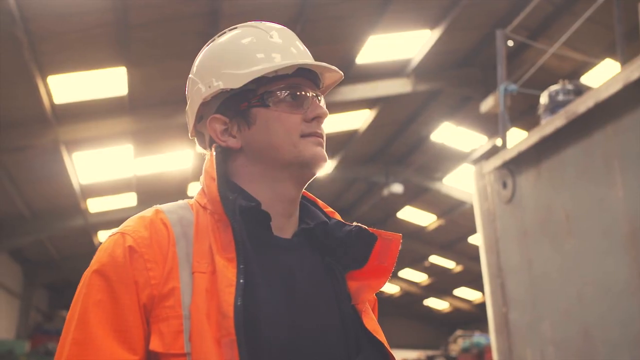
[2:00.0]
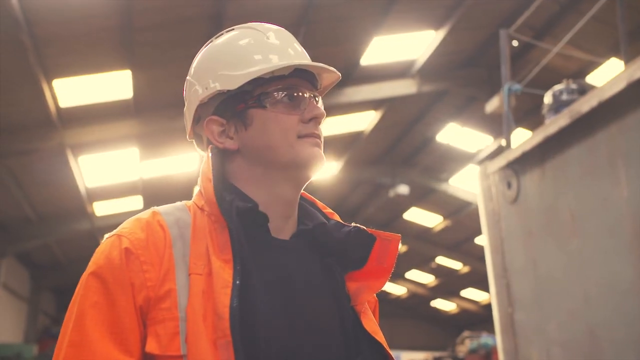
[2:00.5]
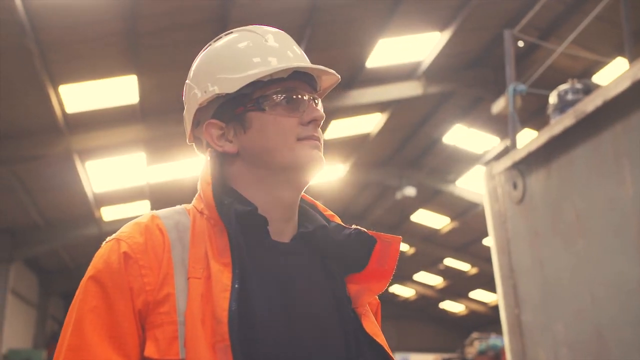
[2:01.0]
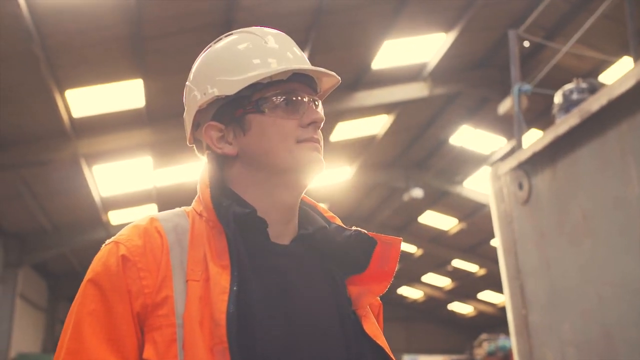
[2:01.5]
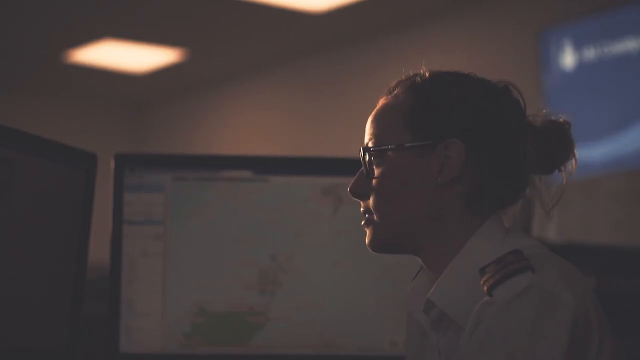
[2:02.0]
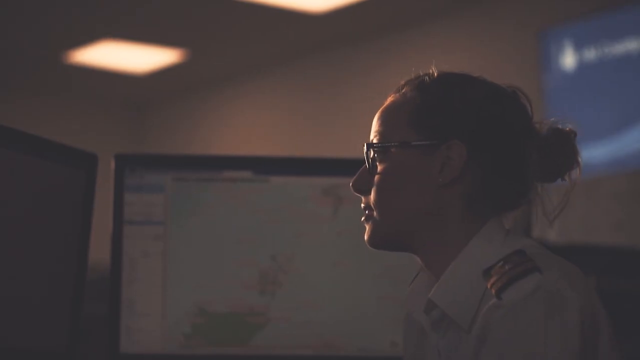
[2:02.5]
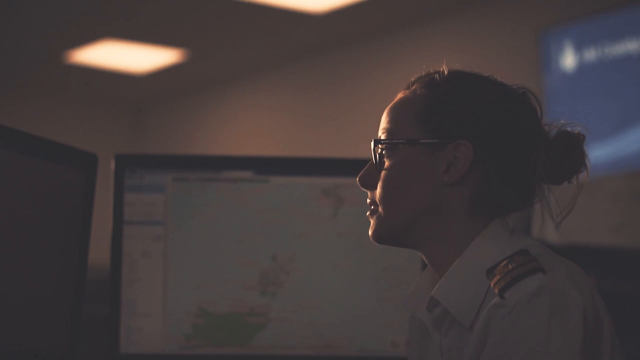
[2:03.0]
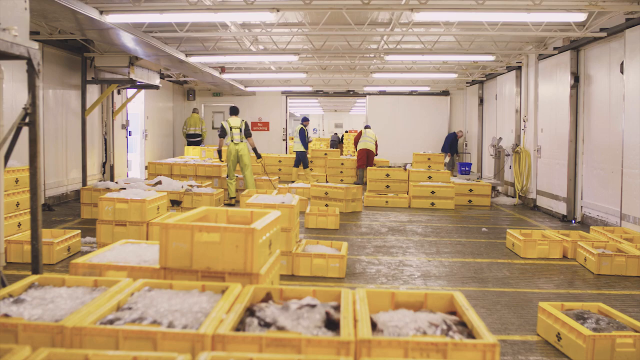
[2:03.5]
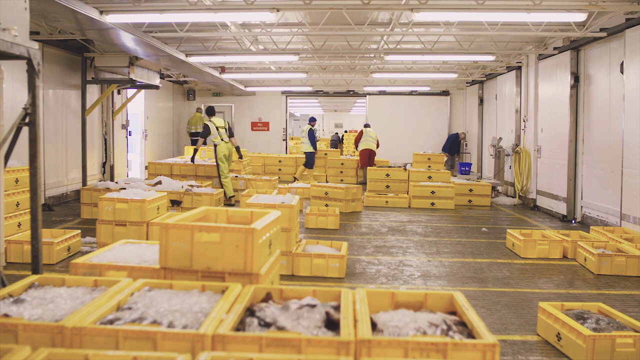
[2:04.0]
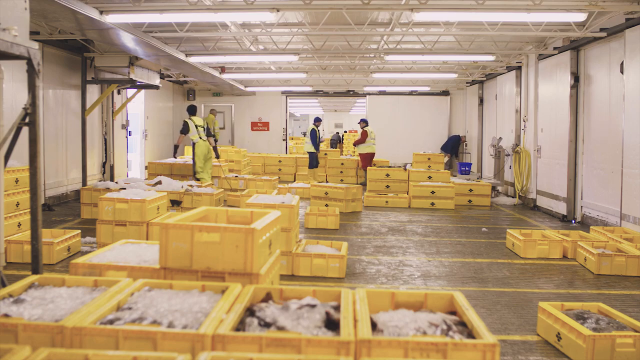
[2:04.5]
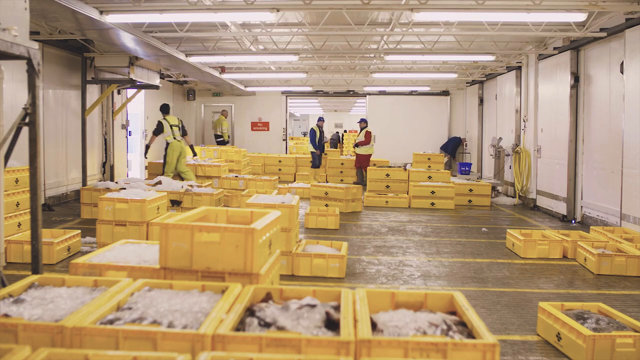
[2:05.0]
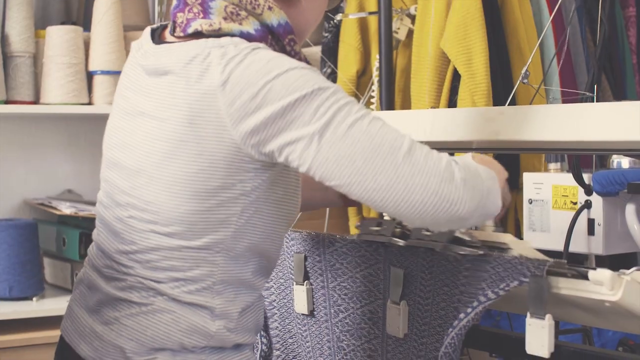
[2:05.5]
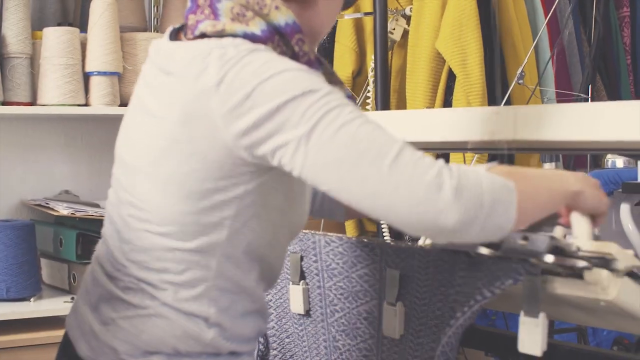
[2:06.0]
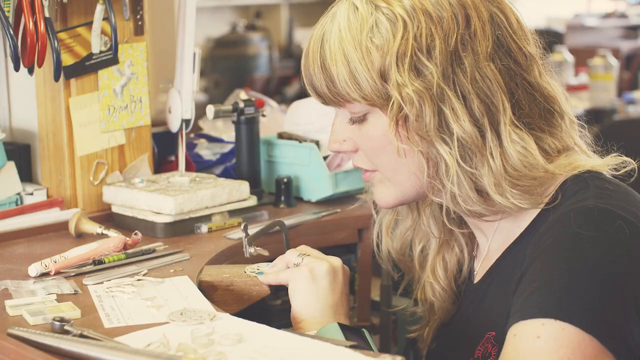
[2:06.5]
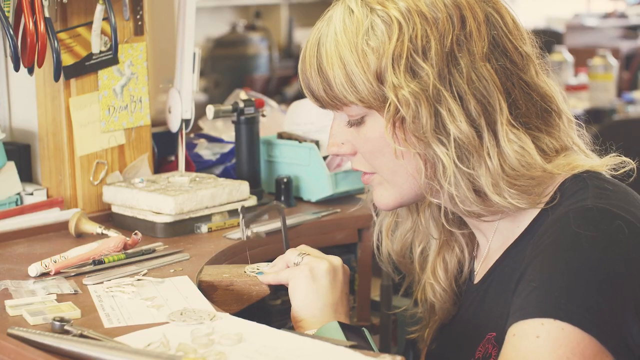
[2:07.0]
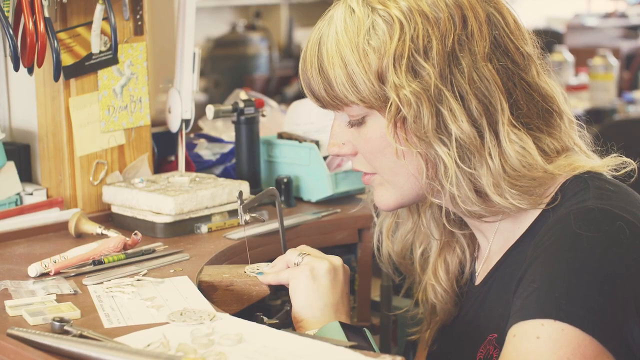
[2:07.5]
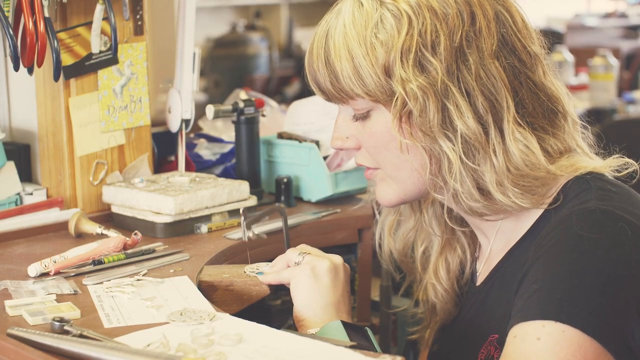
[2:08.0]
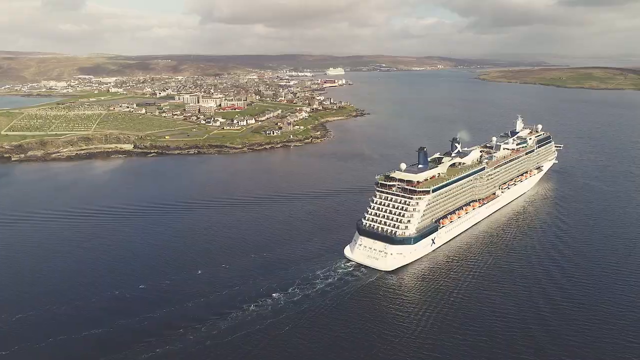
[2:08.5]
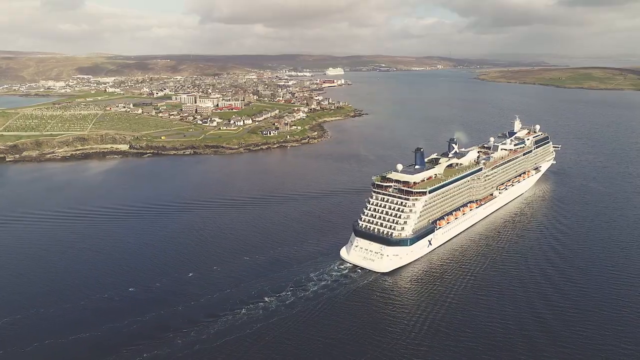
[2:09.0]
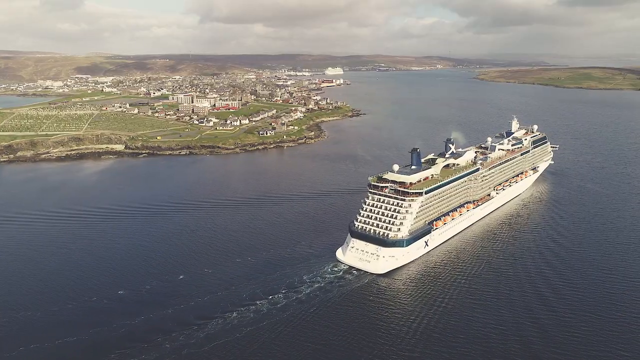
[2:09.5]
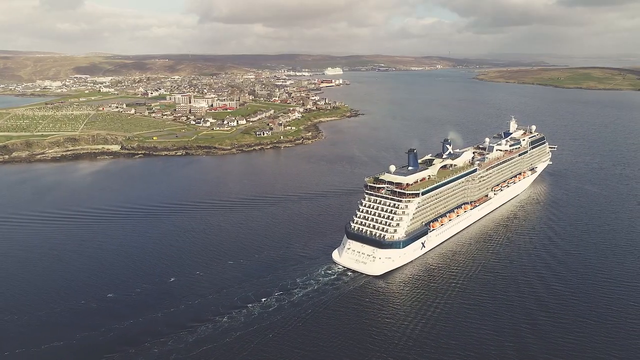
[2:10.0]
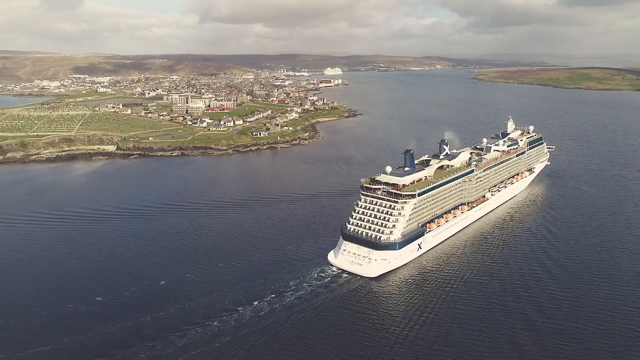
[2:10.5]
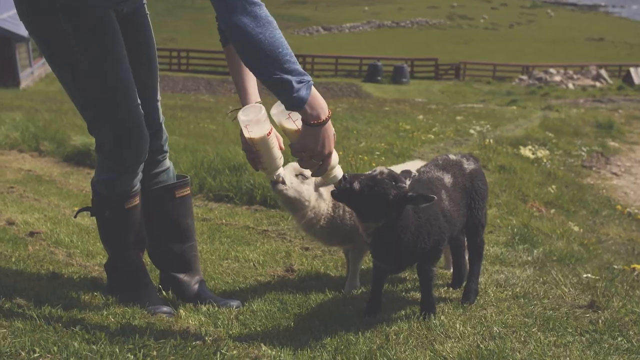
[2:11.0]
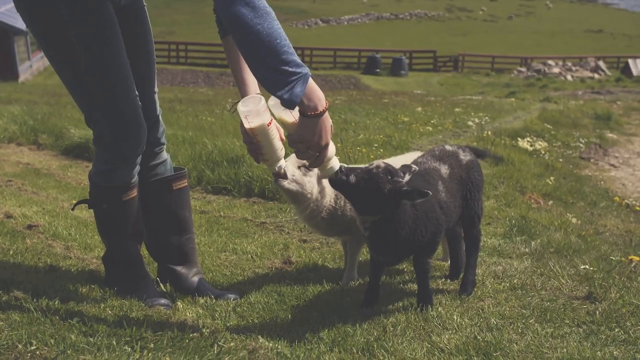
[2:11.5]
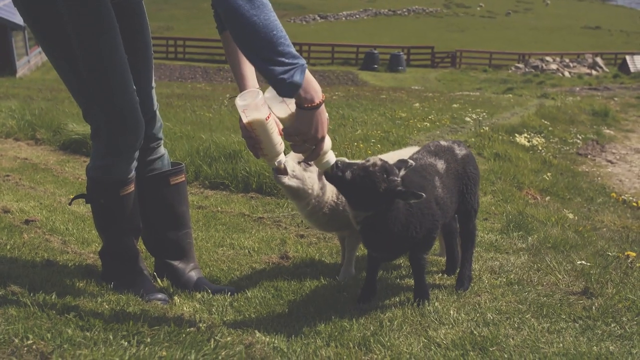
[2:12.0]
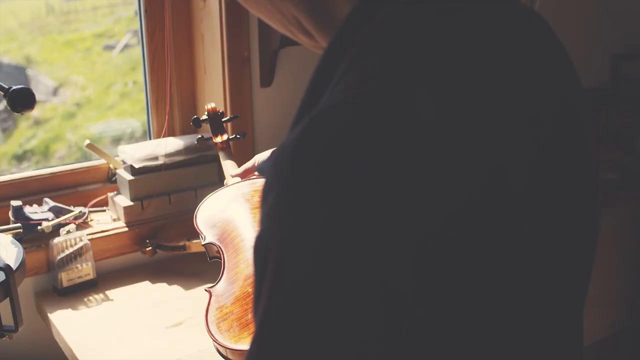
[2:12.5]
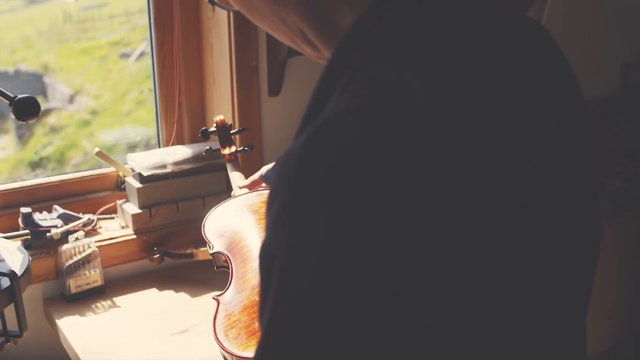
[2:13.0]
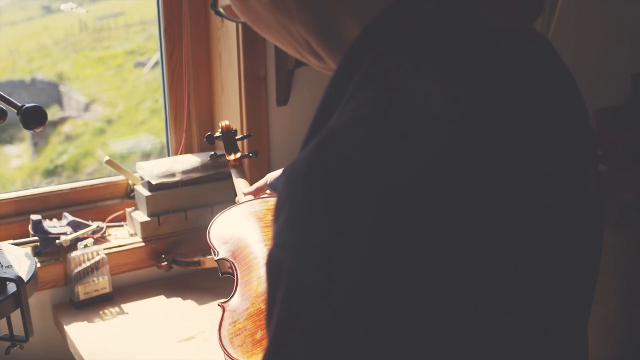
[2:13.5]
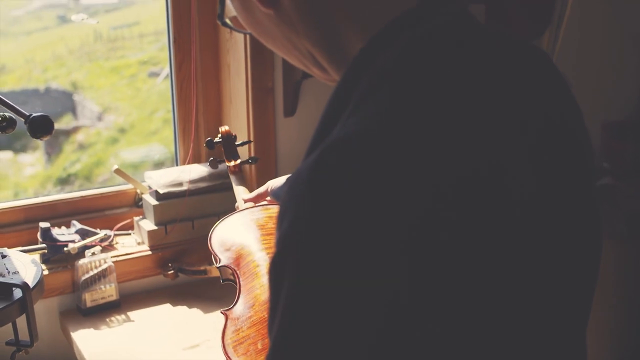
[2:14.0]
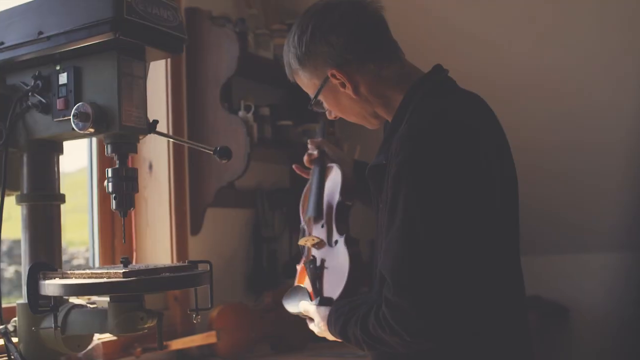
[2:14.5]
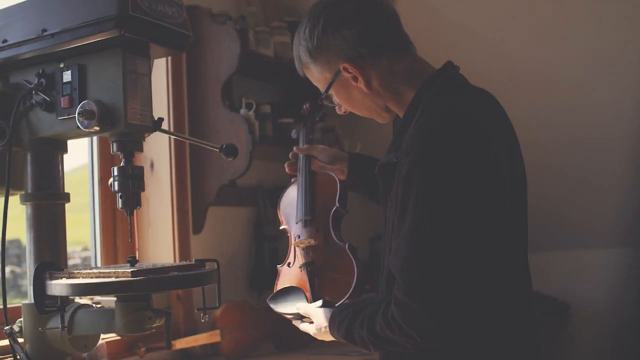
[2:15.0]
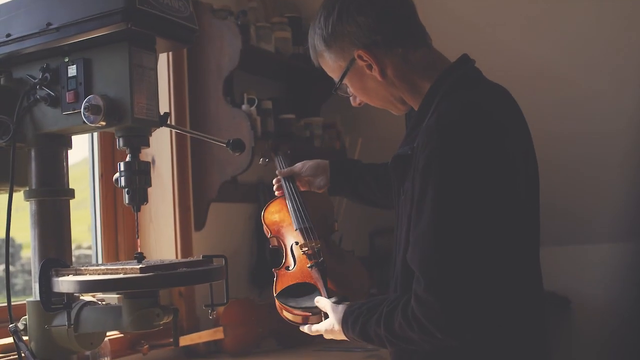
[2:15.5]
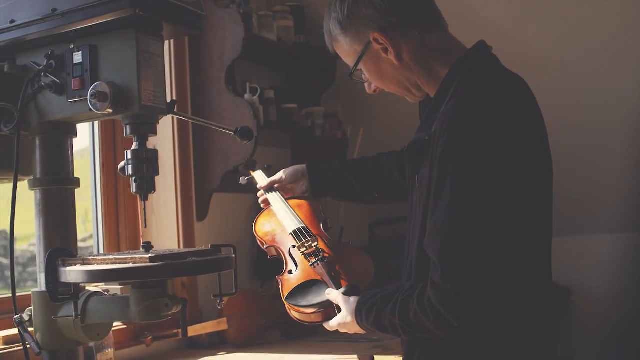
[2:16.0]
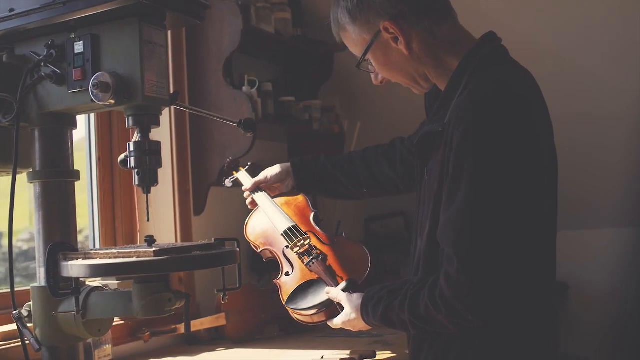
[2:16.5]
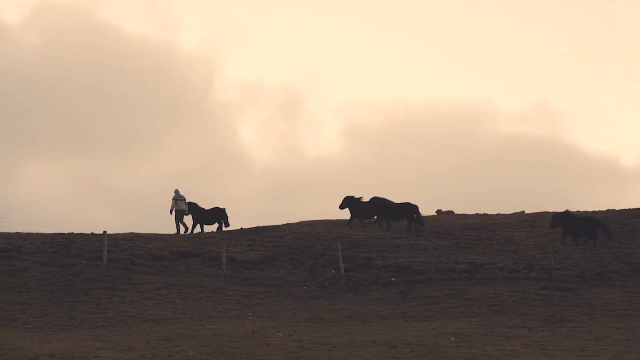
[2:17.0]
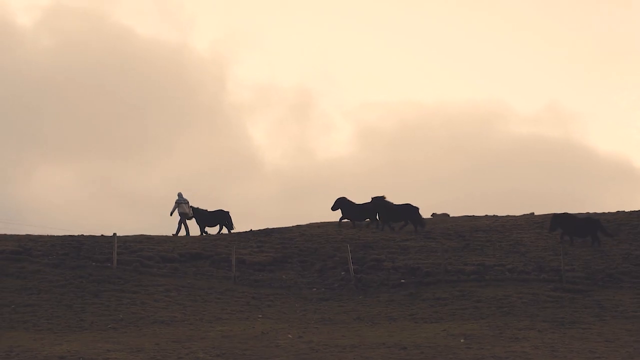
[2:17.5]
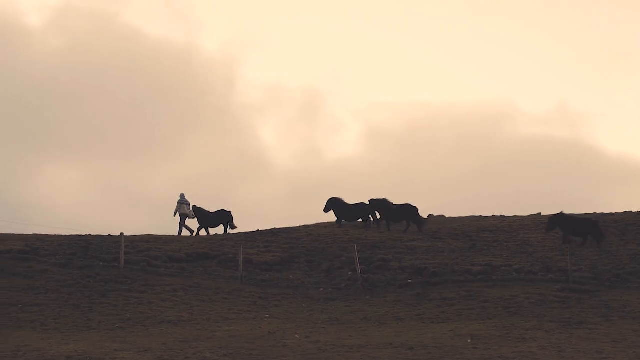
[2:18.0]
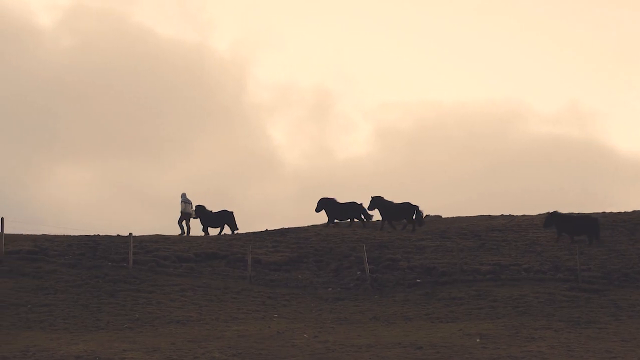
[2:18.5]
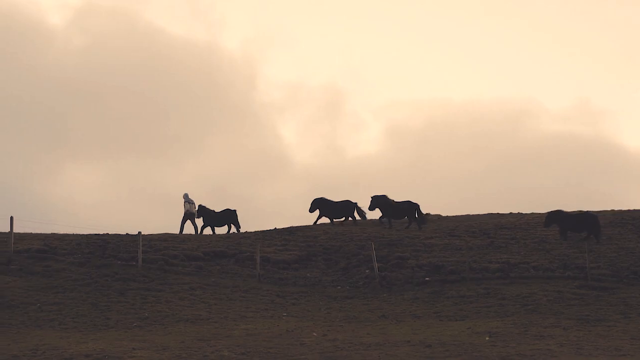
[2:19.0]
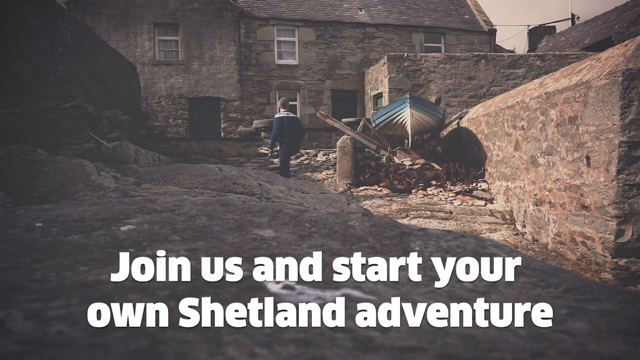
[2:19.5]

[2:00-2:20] A man in work overalls, an orange high-vis with a white hard hat and protective goggles, looks up to the right. A woman in an office setting looks at a set of computer monitors; she wears a white shirt and glasses, with her hair tied back. The video cuts to a factory setting where palettes of fish are laid out in yellow boxes inside a big industrial unit. Workers look through the boxes, all wearing yellow high-vis overalls, with one wearing a blue t-shirt, jeans and yellow wellingtons, one wearing a red set of overalls and one a green set of overalls. Next, a woman works in a textiles factory with various materials across the shelving and files in the background; she wears a purple and white scarf and a white long-sleeved t-shirt. The materials come in many colours, from yellow felt to pink, blue and green felt, along with different lengths of yarn. A younger girl with blonde hair and a black long-sleeve t-shirt works on jewellery using a diamond saw, with lots of materials in the background such as blowtorches, pliers and jewellery-making material. A bird's-eye view shows a white and blue cruise liner going anticlockwise around the island of Shetland. A farmer feeds baby lambs. The older lady seen earlier holds a violin next to a drilling machine. Someone leads horses across a field. Finally, a group of stony houses and buildings with a small boat on hard standing appears, with a woman walking past them all. White text at the bottom of the screen reads "join us and start your own Shetland adventure".